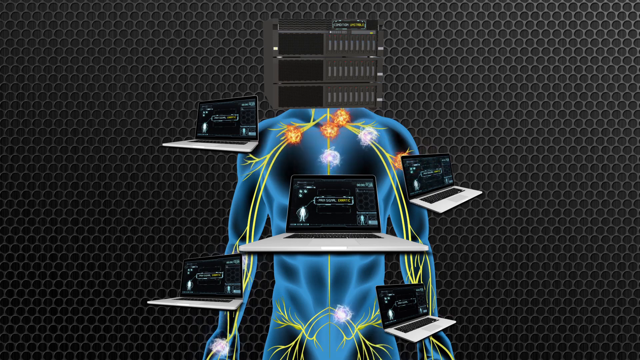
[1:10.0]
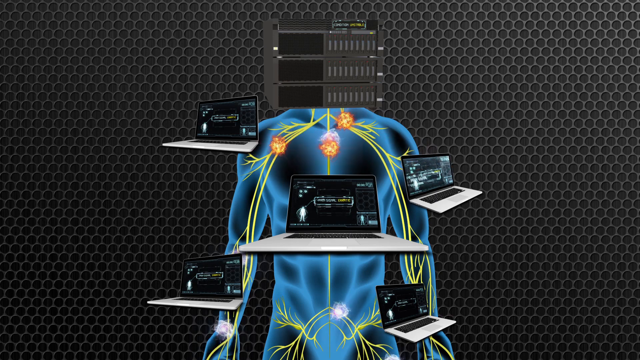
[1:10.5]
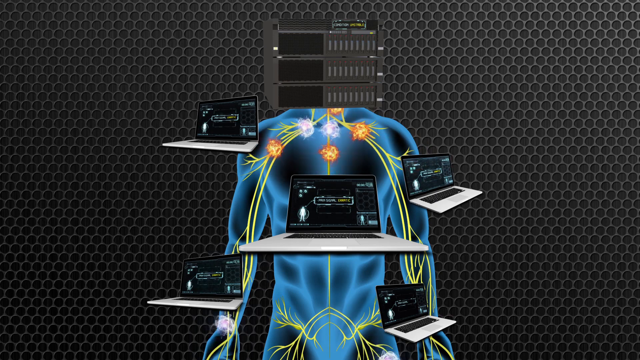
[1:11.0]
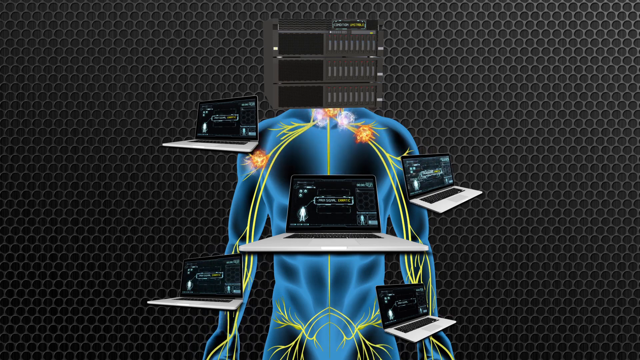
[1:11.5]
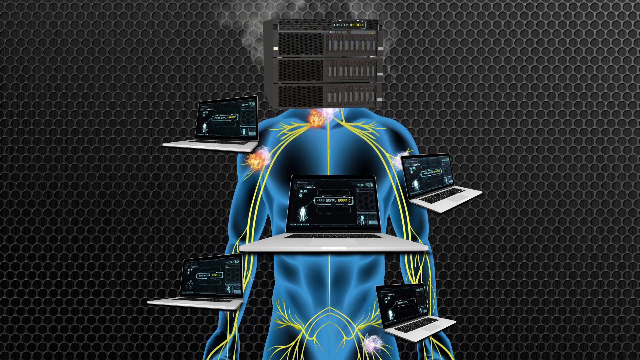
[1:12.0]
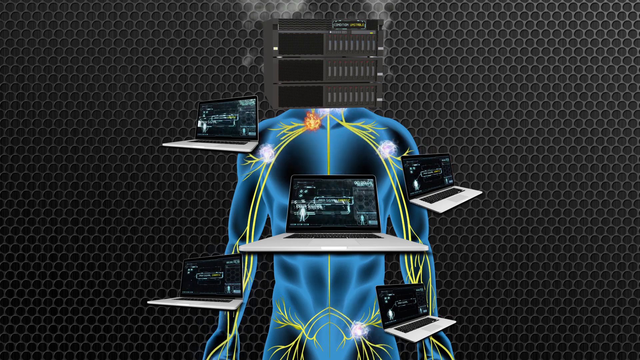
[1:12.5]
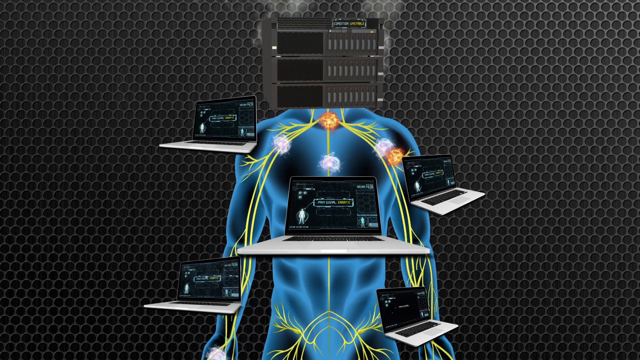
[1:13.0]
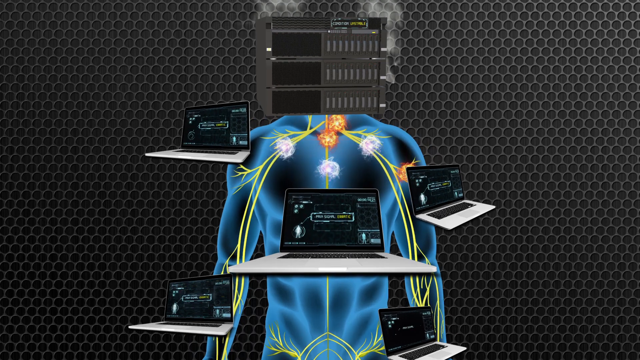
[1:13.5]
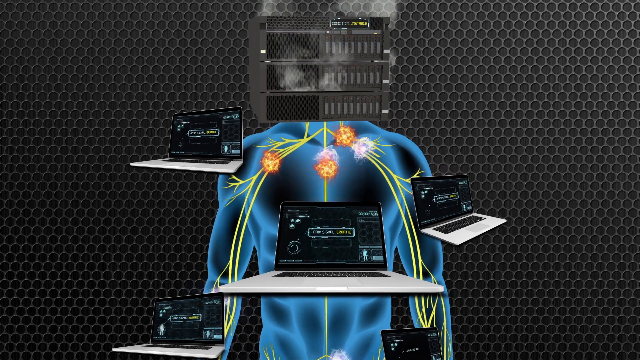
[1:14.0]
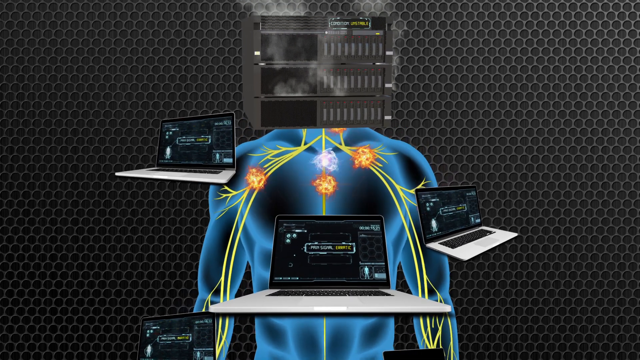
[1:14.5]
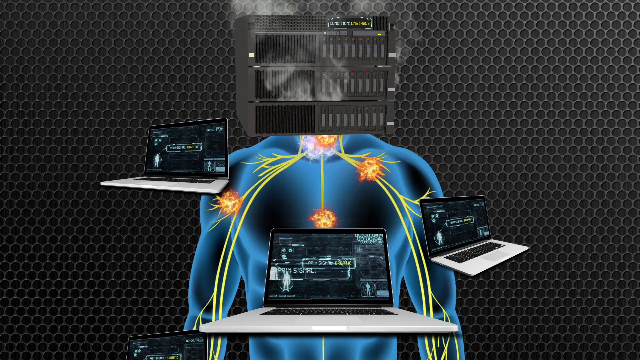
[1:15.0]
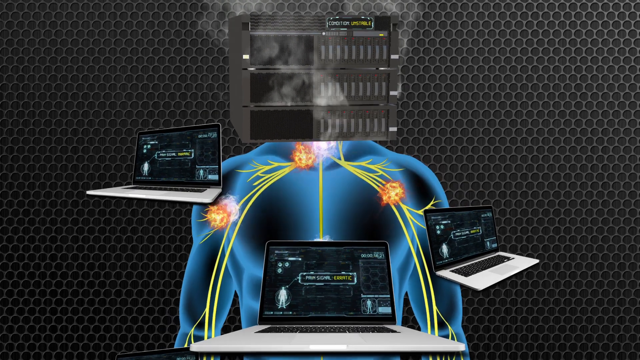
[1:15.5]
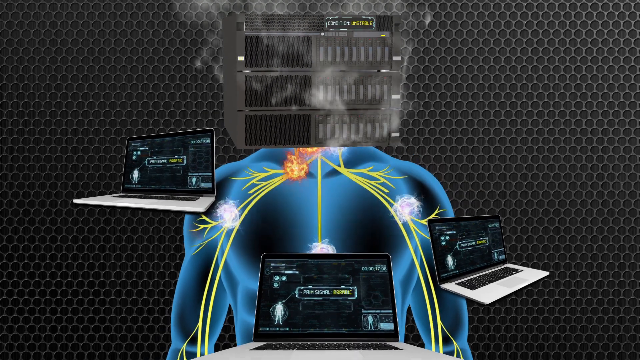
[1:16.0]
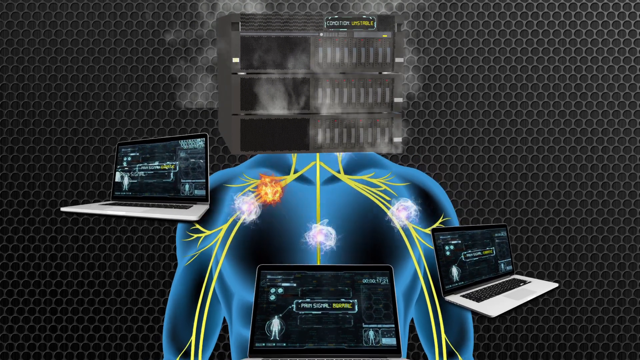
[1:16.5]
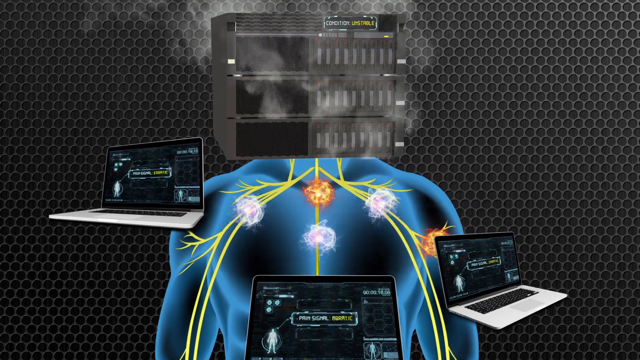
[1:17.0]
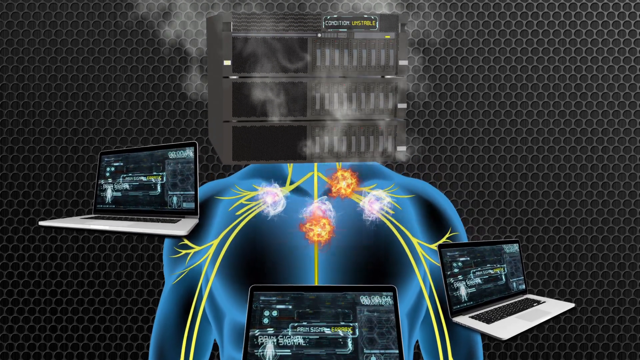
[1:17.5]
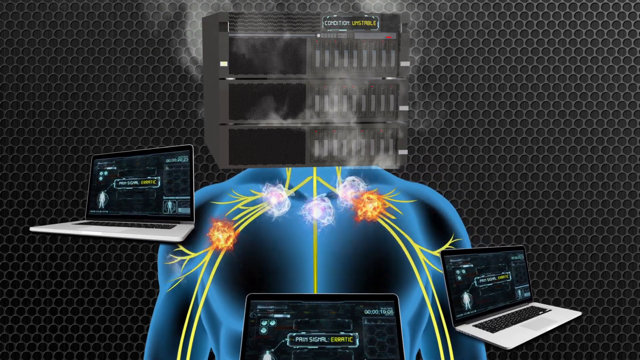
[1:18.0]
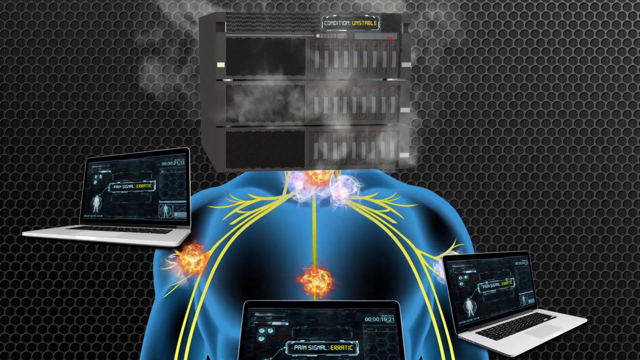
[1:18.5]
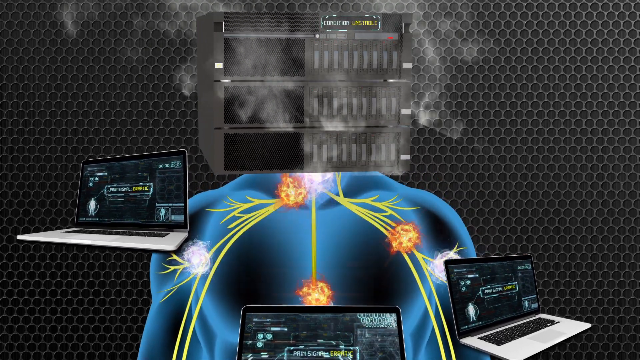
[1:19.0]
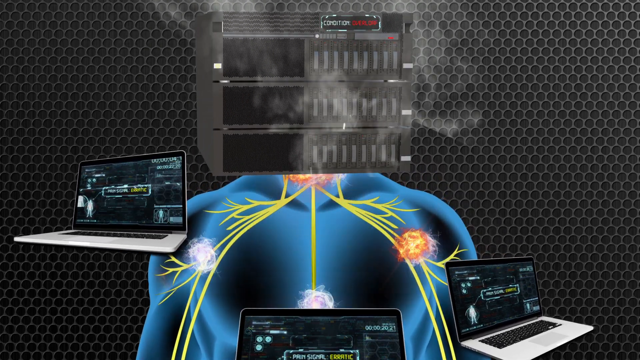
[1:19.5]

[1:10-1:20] Orbs keep moving quickly through the yellow veins from all five laptops into the control center. The control center starts to smoke while the orbs continue traveling into and out of it. The orange orbs coming from the laptops seem to be overloading the control center, which represents the human brain.